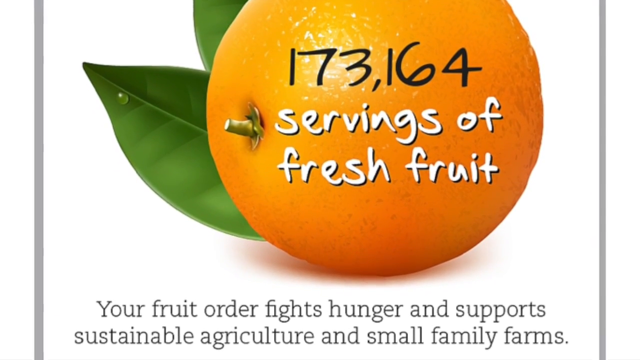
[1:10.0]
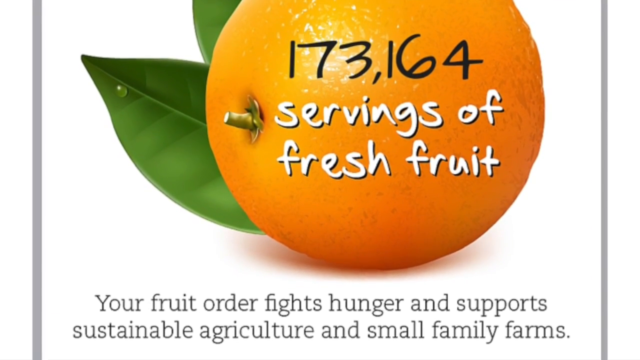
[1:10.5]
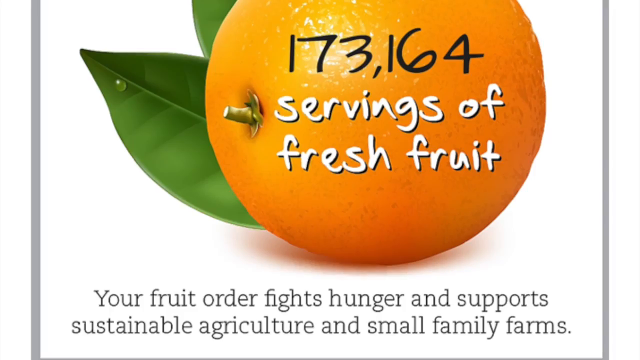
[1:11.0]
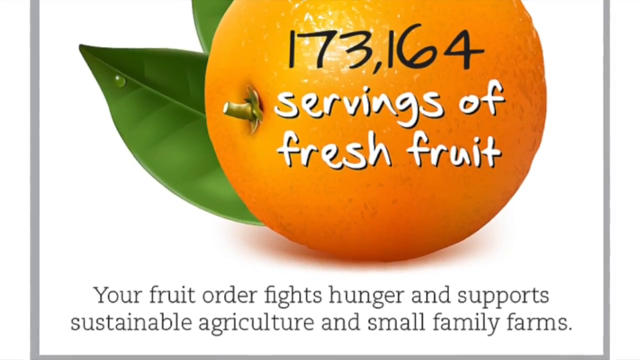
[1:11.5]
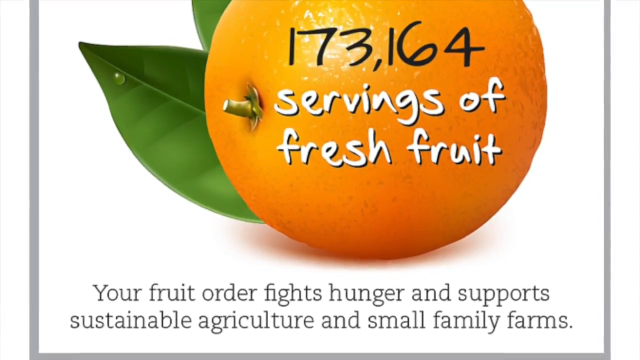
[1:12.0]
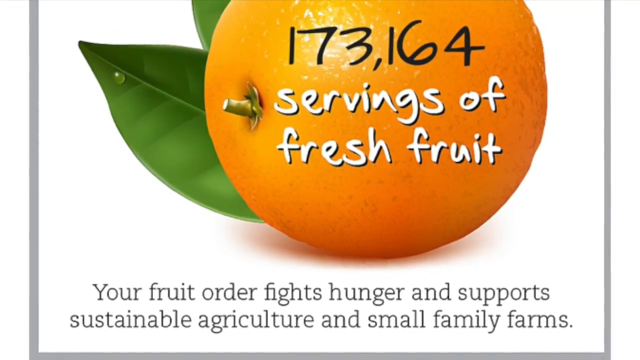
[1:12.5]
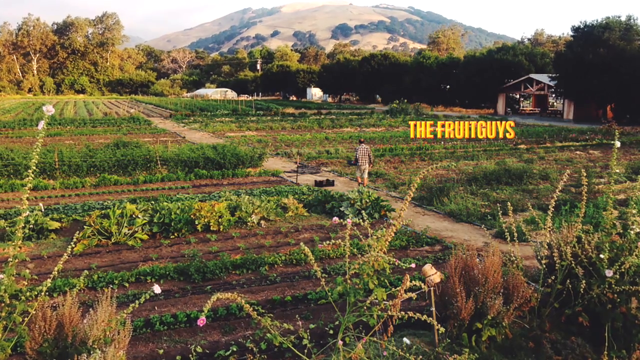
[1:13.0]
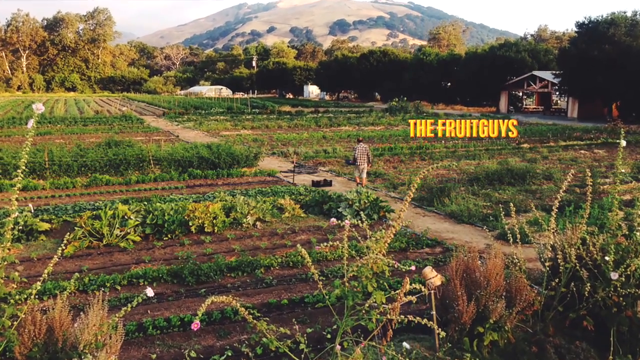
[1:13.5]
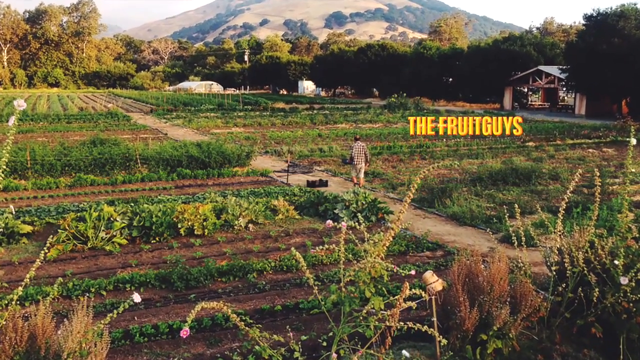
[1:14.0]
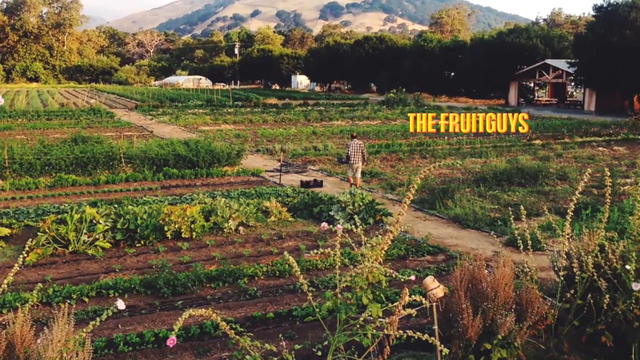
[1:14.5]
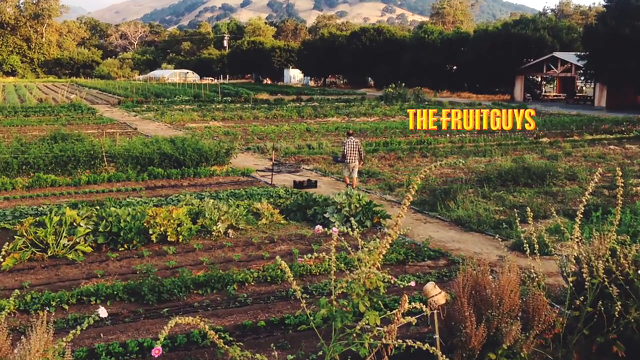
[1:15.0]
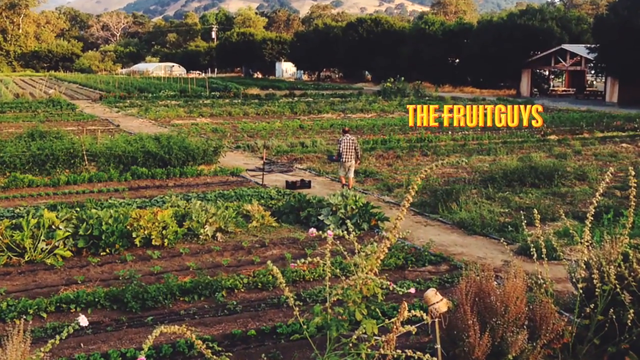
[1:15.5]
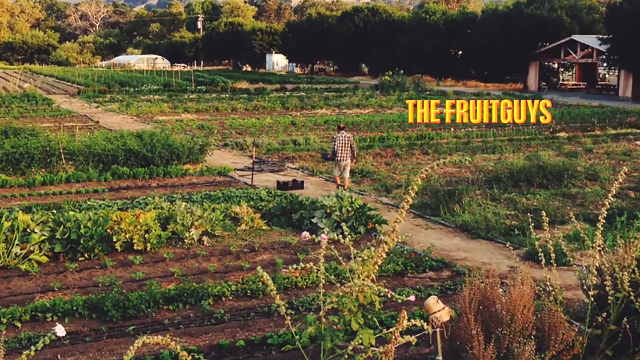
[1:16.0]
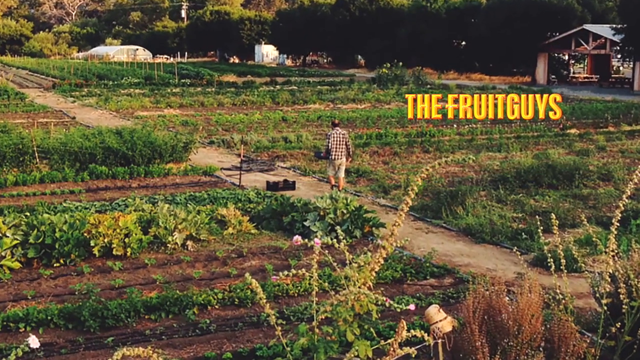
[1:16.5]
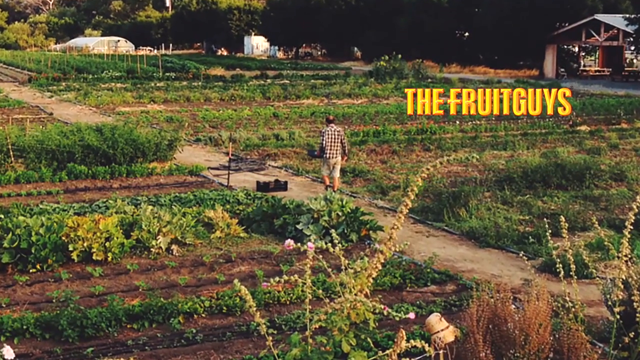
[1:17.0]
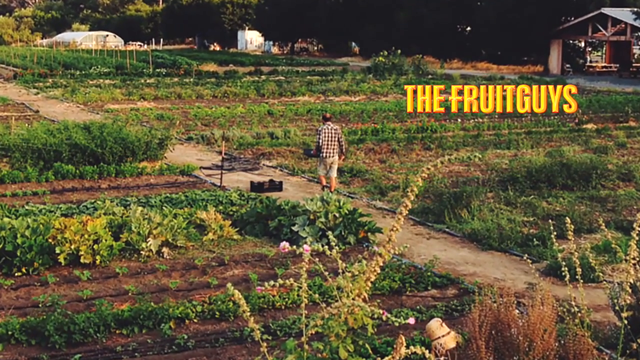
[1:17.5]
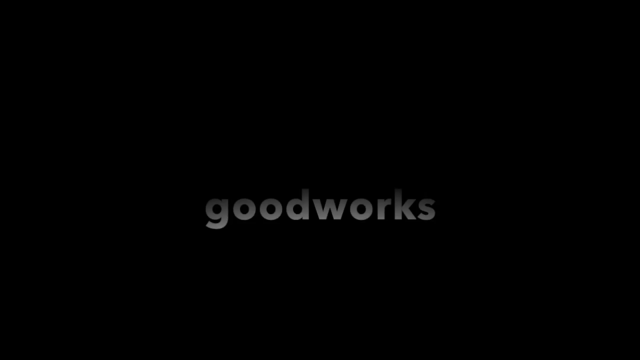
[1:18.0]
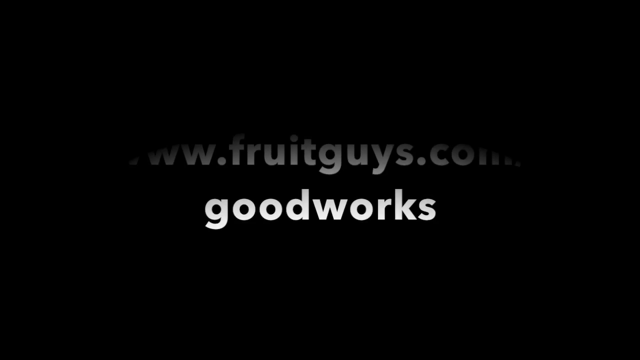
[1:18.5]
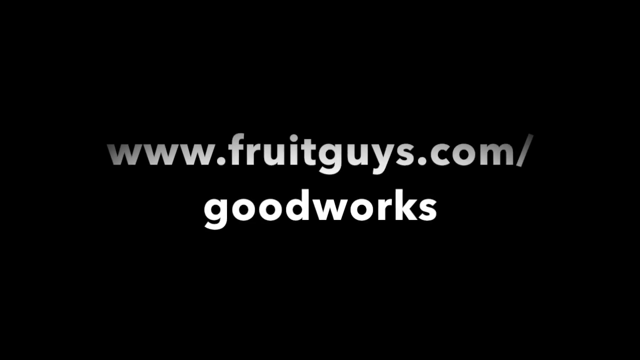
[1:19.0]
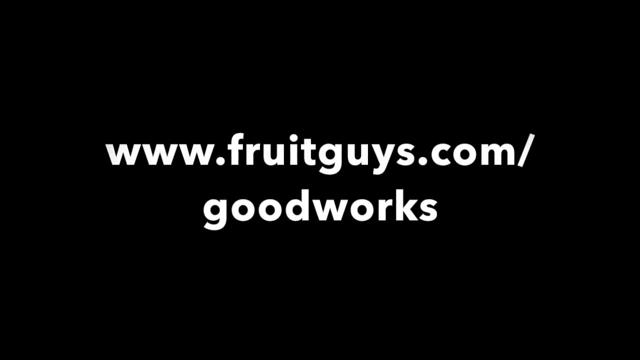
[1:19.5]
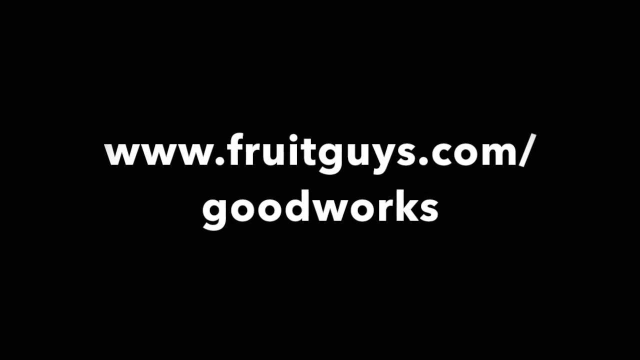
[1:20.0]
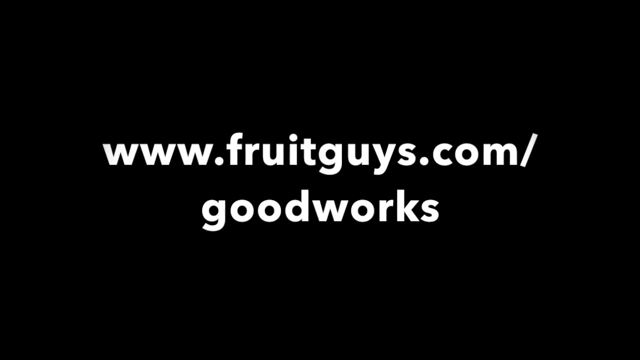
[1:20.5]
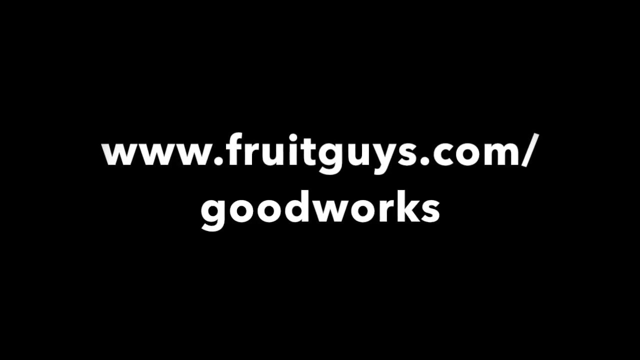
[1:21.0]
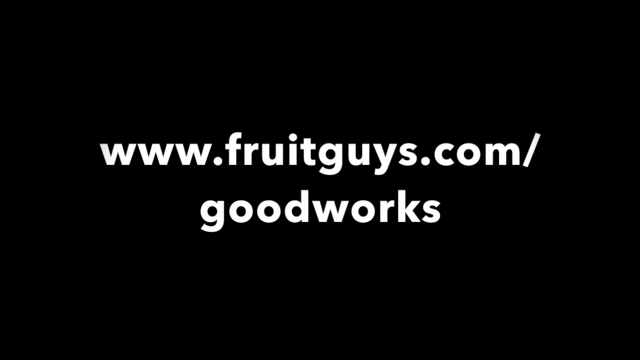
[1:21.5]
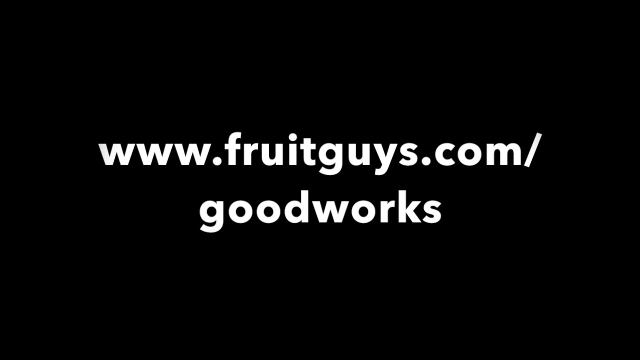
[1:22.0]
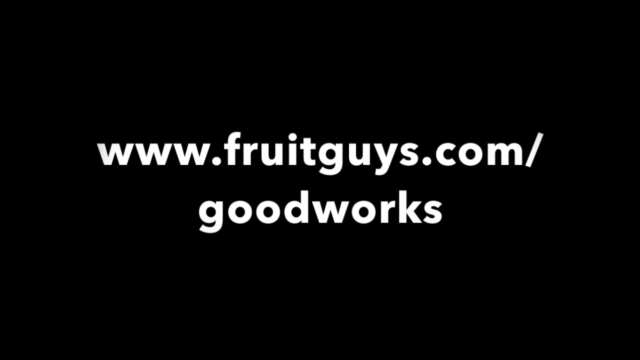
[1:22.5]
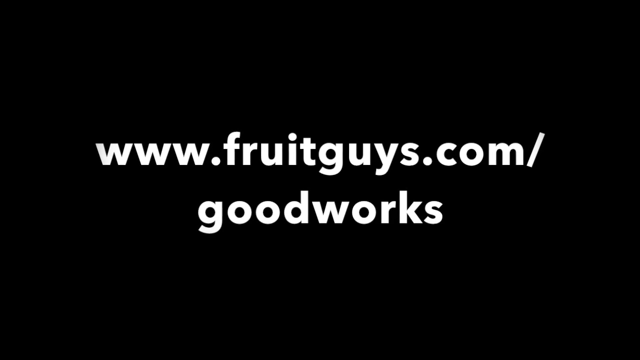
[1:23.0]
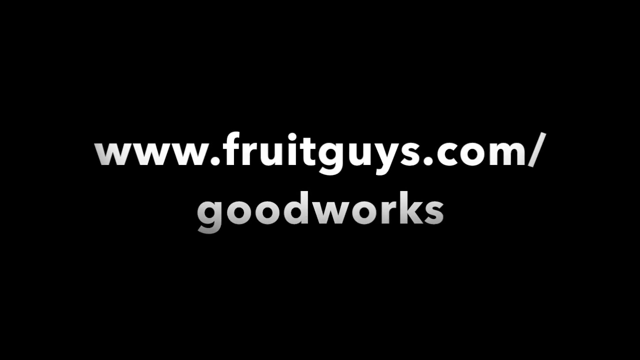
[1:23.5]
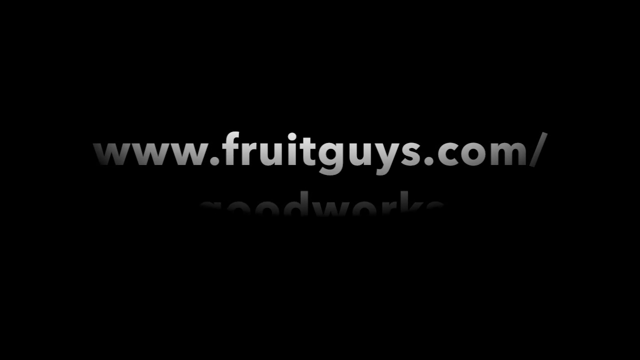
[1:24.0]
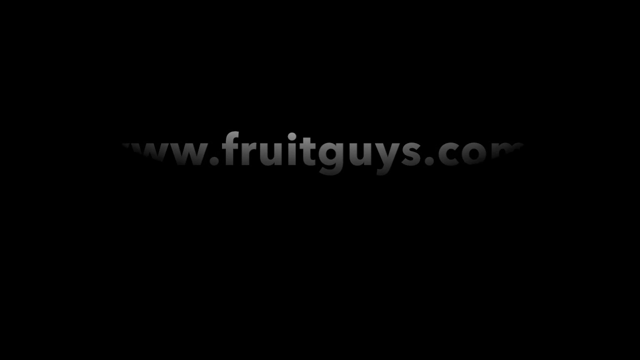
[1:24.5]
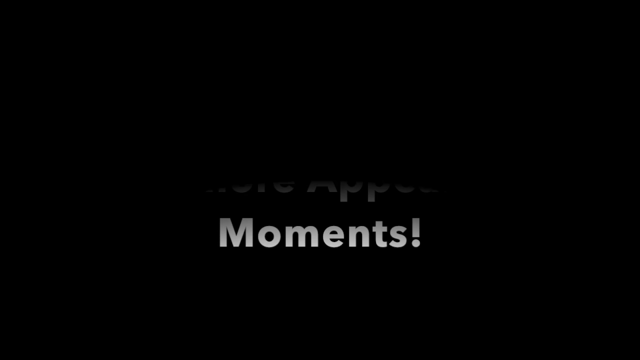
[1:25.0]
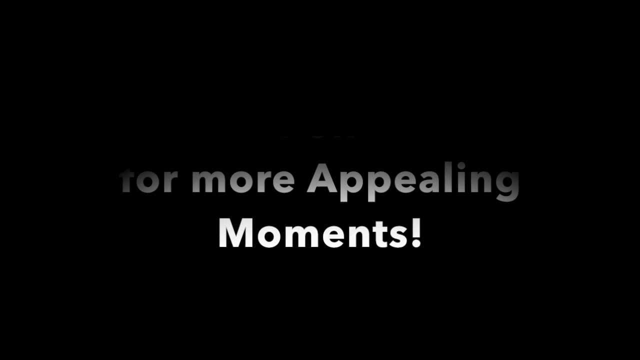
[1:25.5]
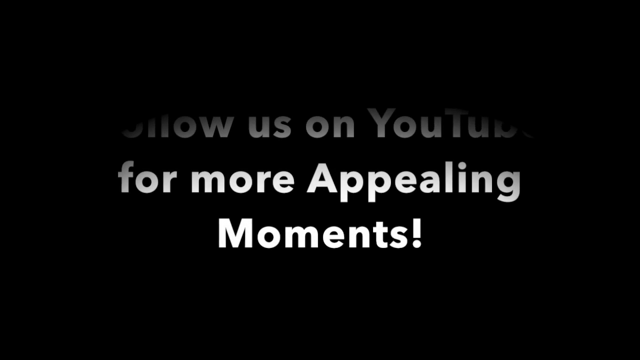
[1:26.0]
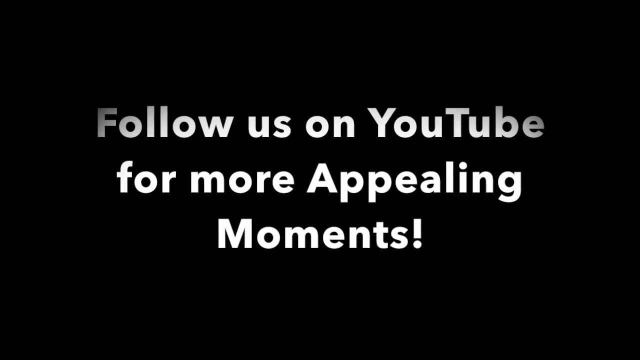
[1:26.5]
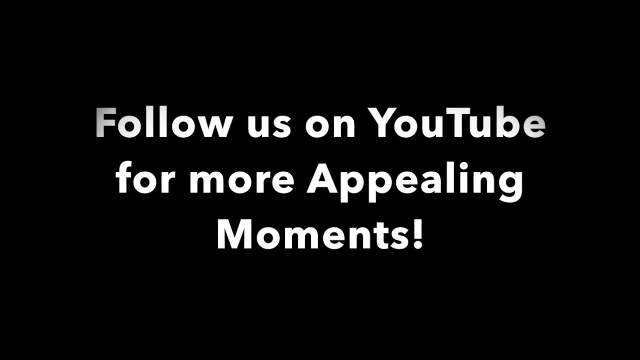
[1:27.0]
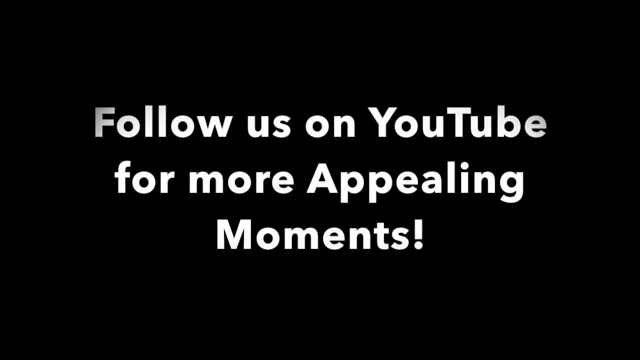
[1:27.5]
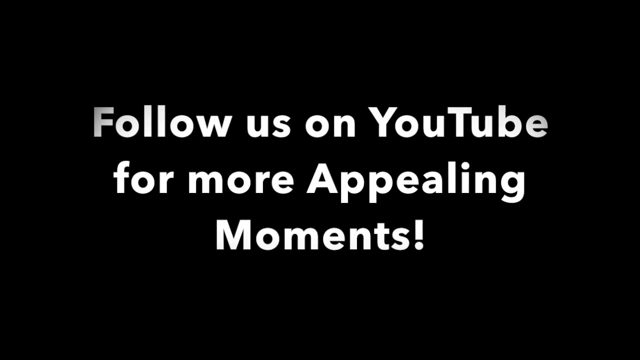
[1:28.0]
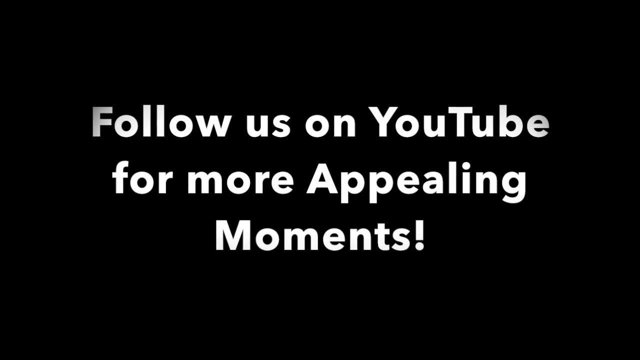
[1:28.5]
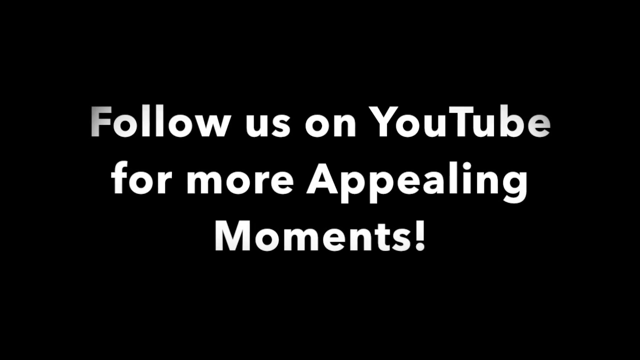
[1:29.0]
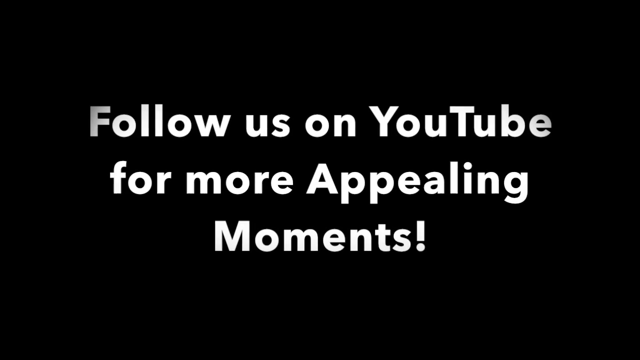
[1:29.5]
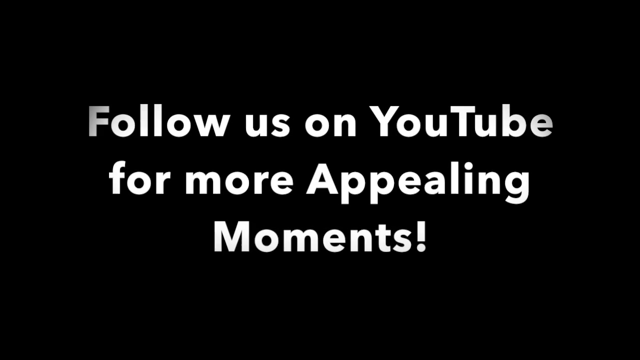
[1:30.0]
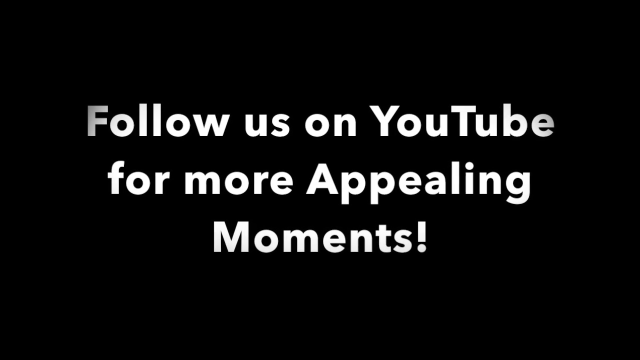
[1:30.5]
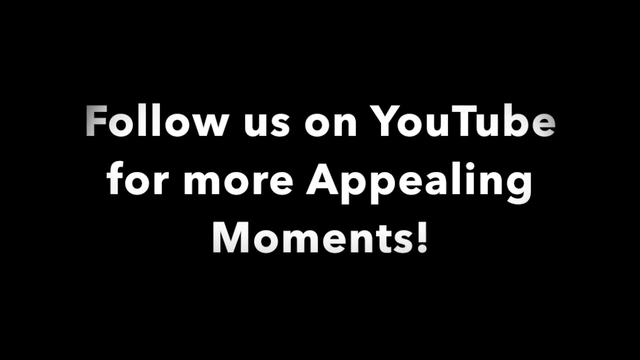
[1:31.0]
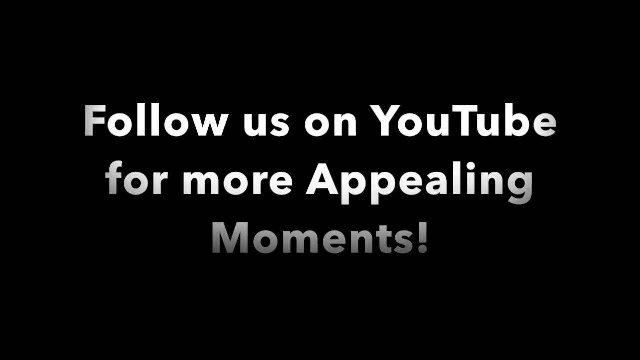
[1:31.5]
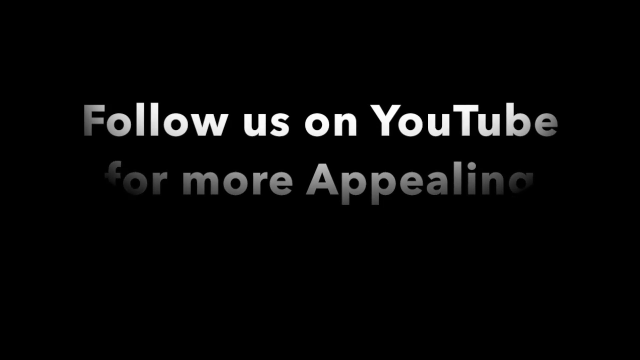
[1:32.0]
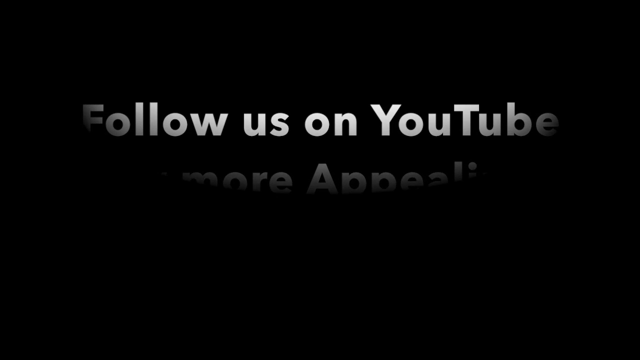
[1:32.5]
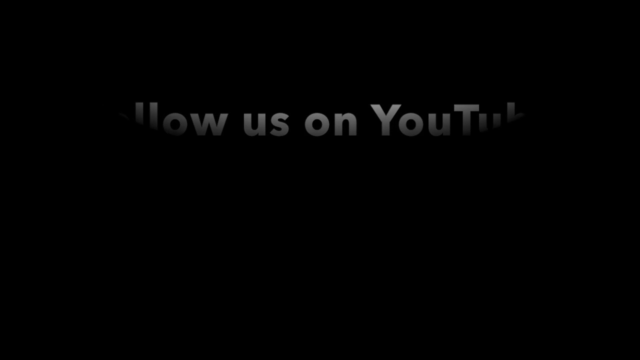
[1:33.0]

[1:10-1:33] A fruit is shown with text saying "173,164 servings of fresh fruit" have been donated, and as the video progresses the words at the bottom read "your fruit order fights hunger and supports sustainable agriculture and small family farms." The camera zooms in on a big farm with the text "the fruit guys." Then "www.fruitguys.com/good works" appears in white font on a black background. The video cuts to words that slowly fade in: "follow us on youtube for more appealing moments!" The words get a little bigger and then slowly fade out until only parts remain visible: part of "follow," "us on," "you," and the "t" of "tube."